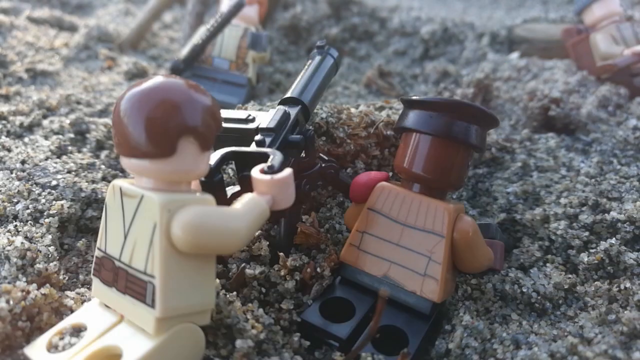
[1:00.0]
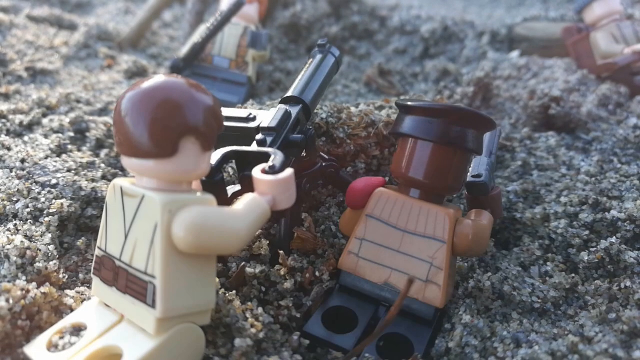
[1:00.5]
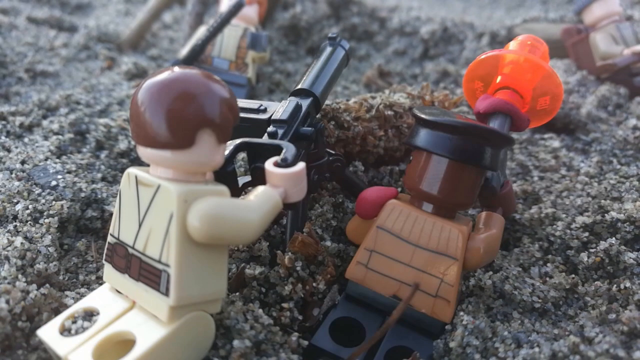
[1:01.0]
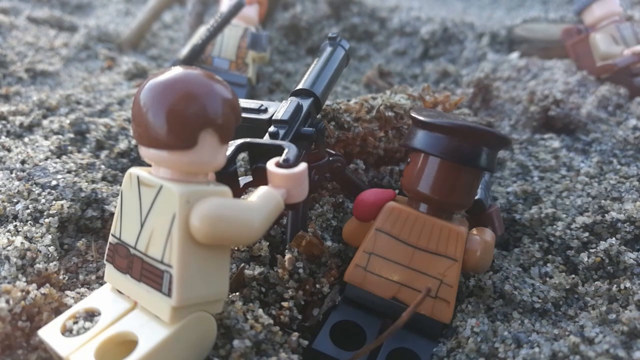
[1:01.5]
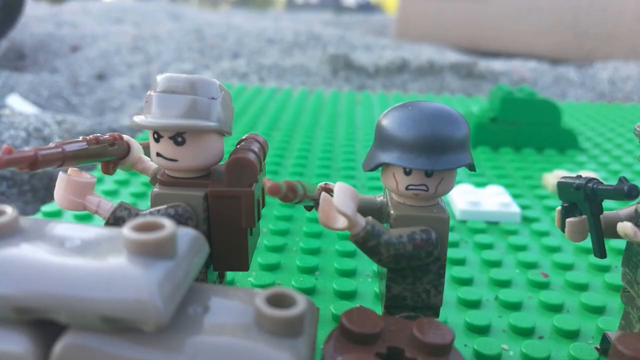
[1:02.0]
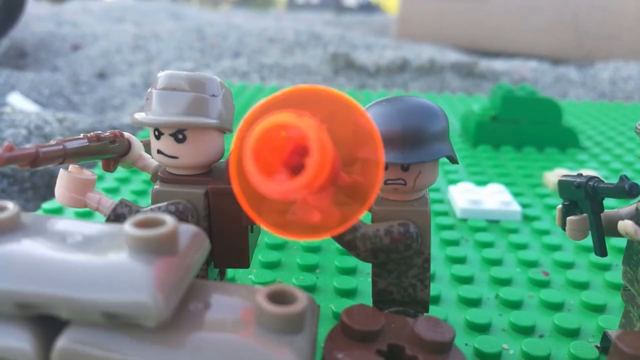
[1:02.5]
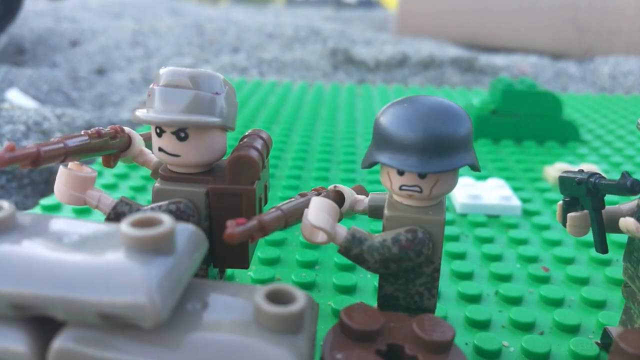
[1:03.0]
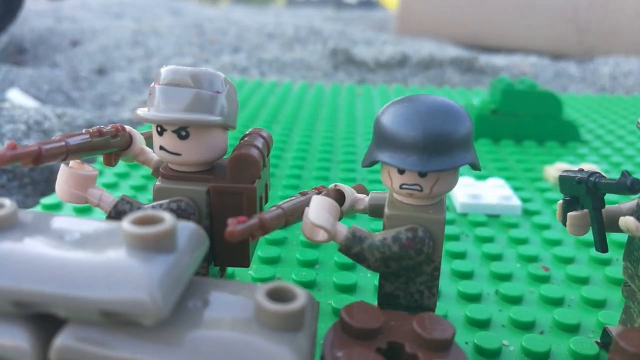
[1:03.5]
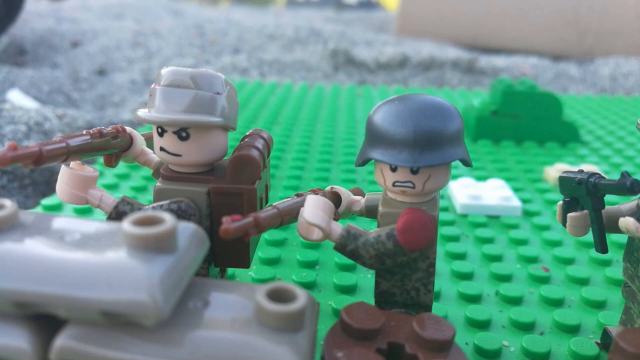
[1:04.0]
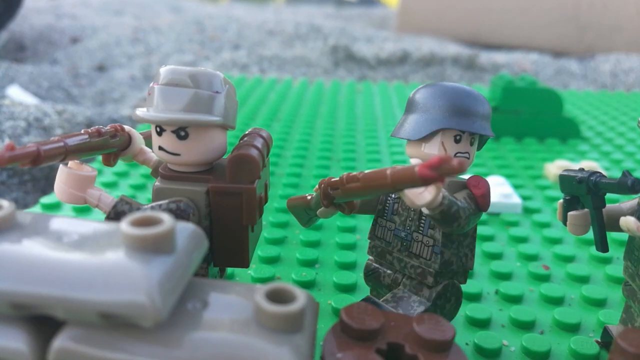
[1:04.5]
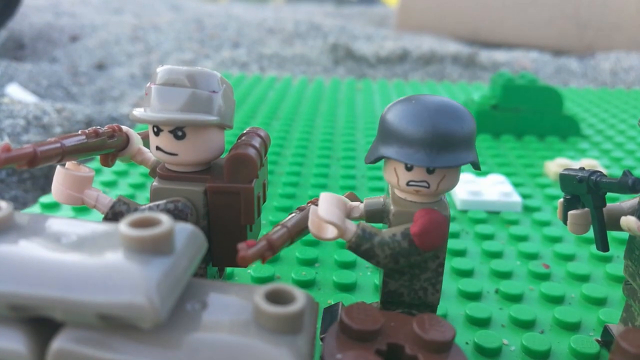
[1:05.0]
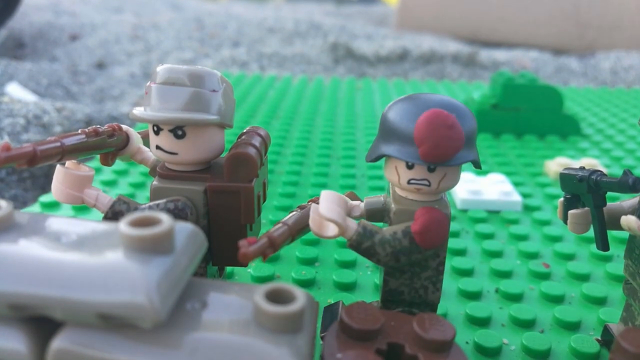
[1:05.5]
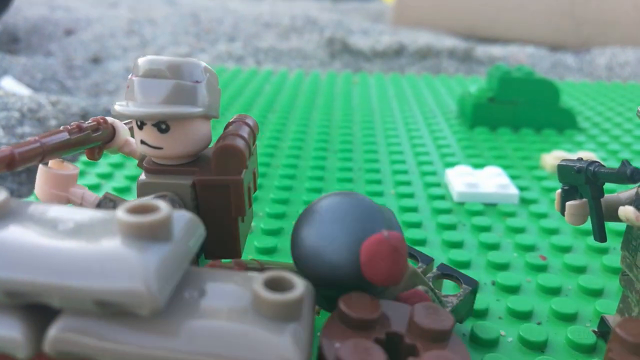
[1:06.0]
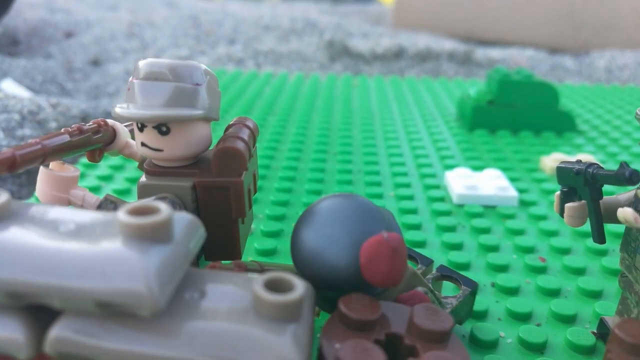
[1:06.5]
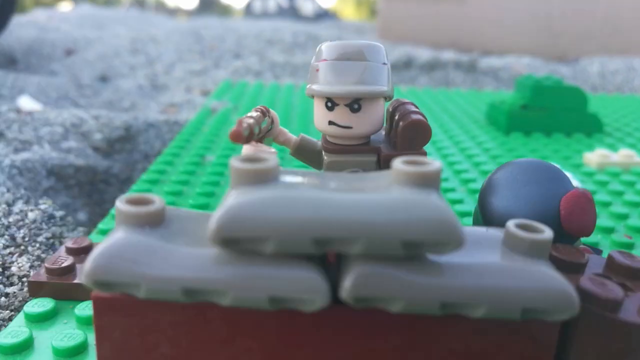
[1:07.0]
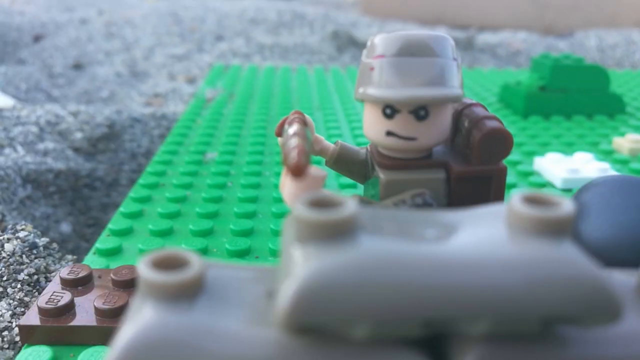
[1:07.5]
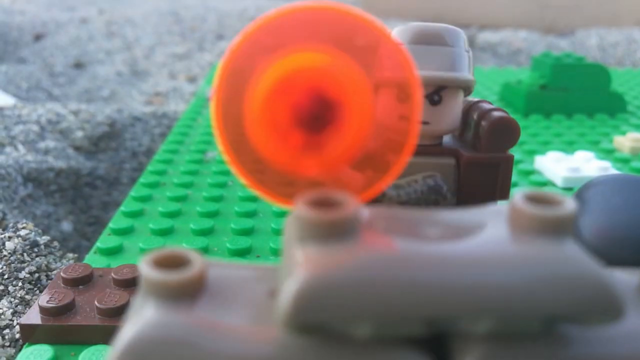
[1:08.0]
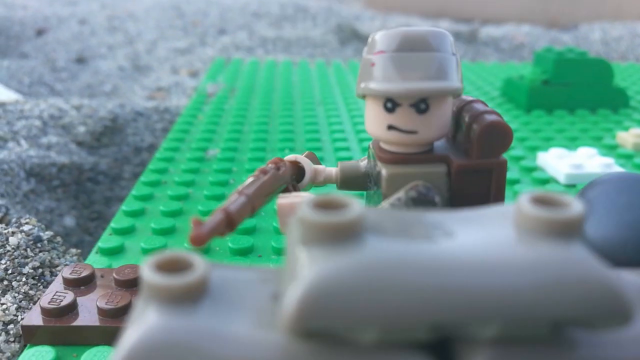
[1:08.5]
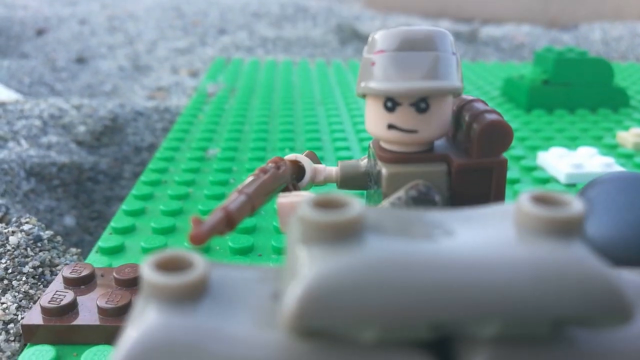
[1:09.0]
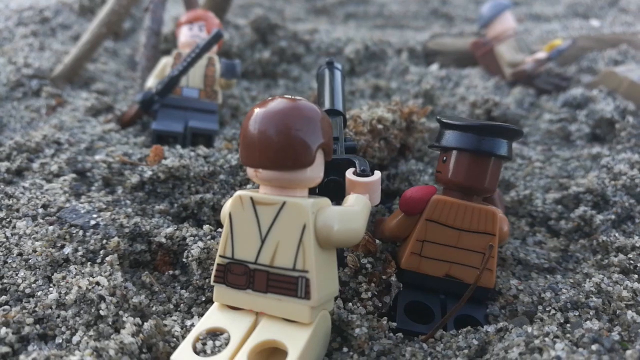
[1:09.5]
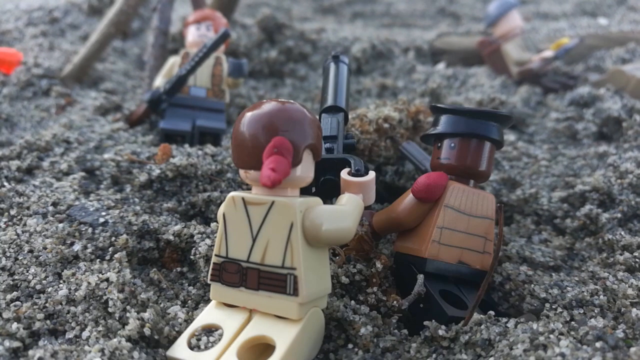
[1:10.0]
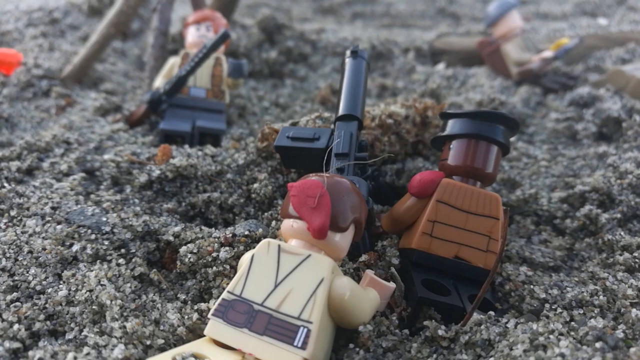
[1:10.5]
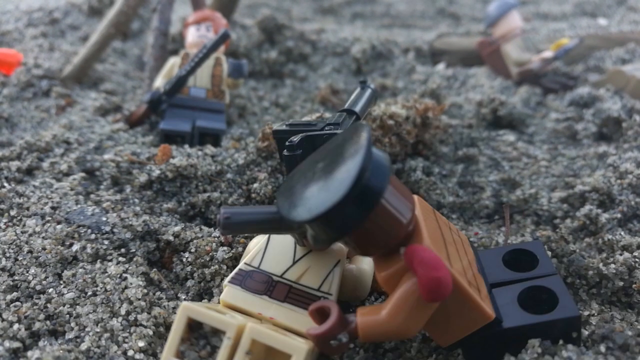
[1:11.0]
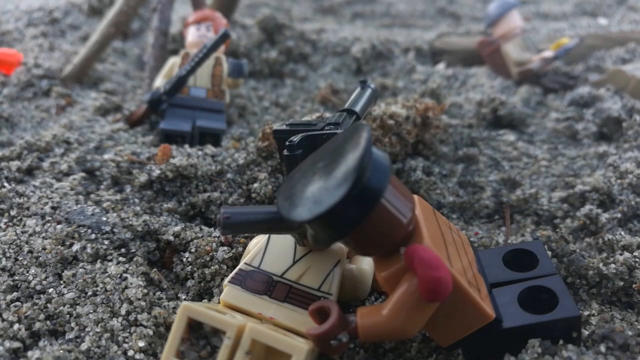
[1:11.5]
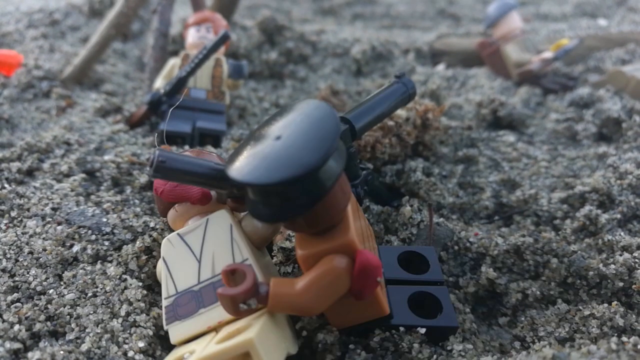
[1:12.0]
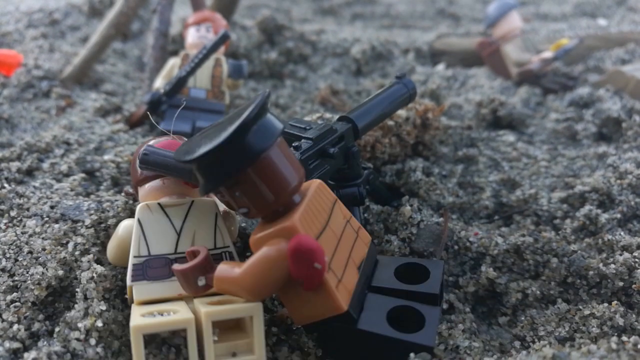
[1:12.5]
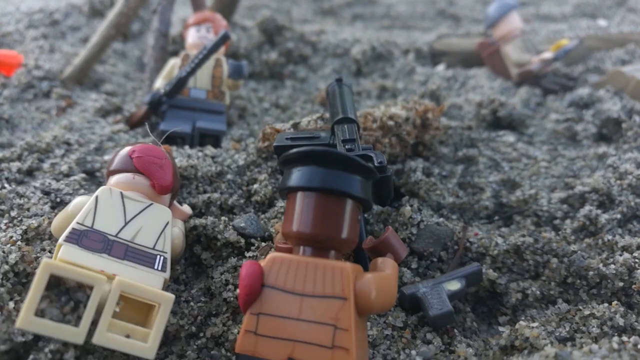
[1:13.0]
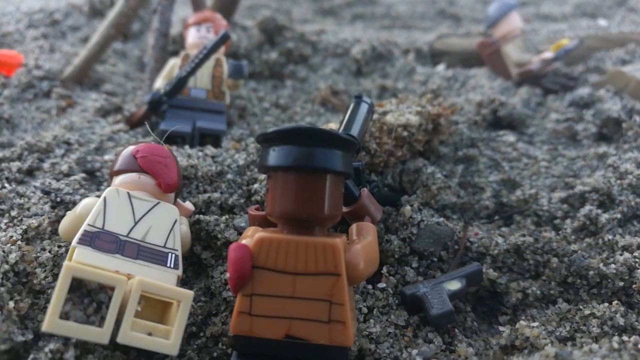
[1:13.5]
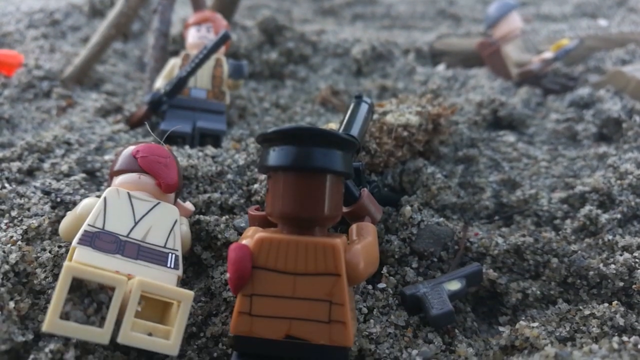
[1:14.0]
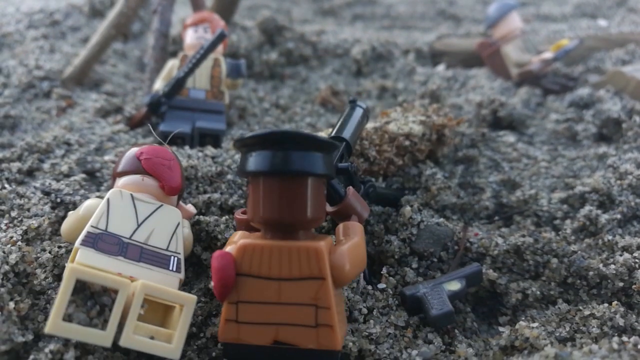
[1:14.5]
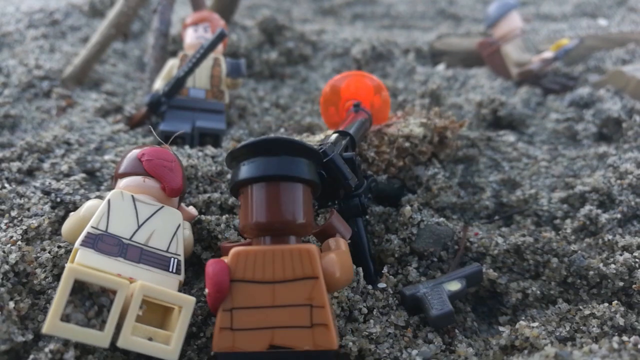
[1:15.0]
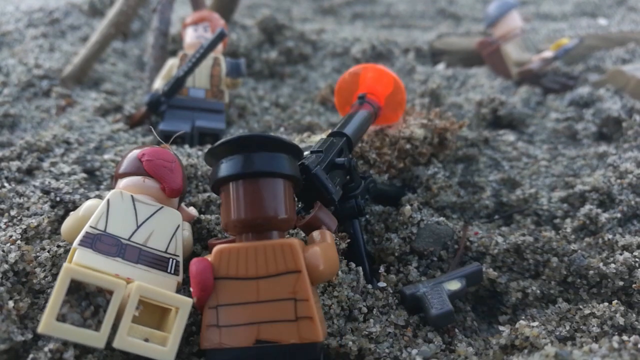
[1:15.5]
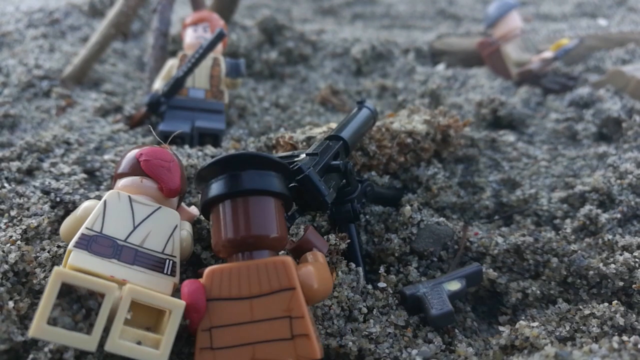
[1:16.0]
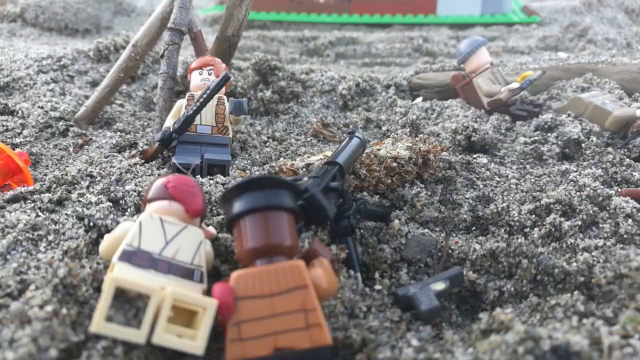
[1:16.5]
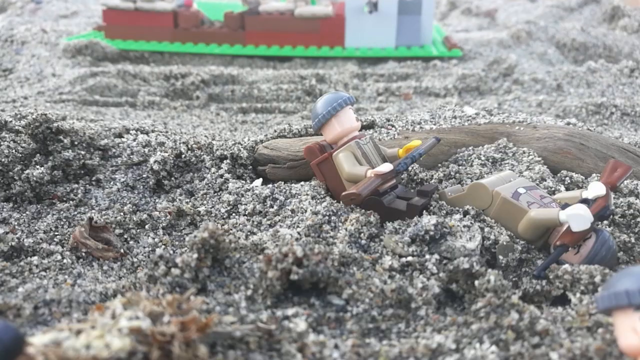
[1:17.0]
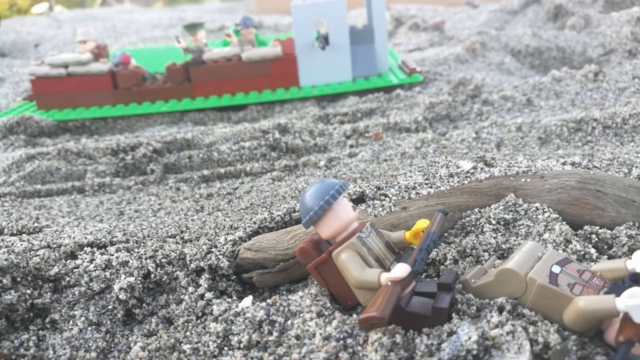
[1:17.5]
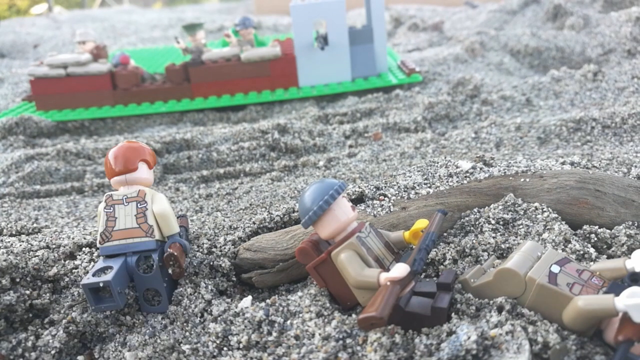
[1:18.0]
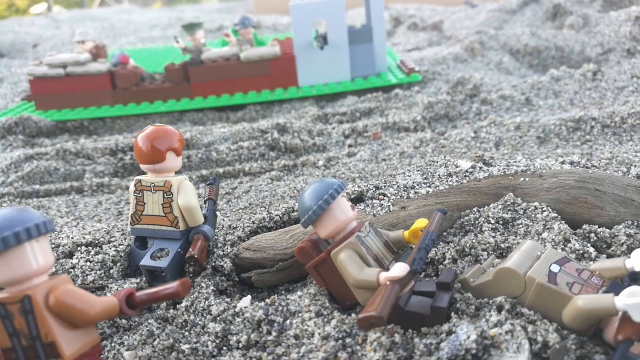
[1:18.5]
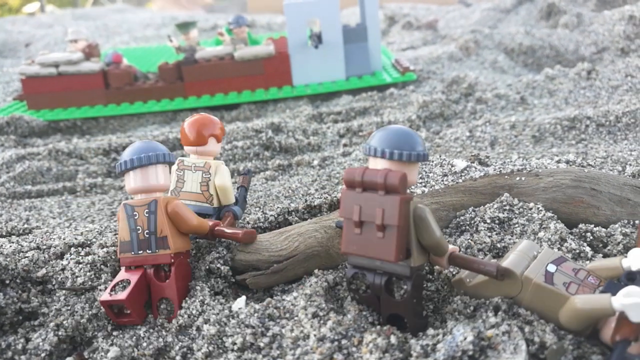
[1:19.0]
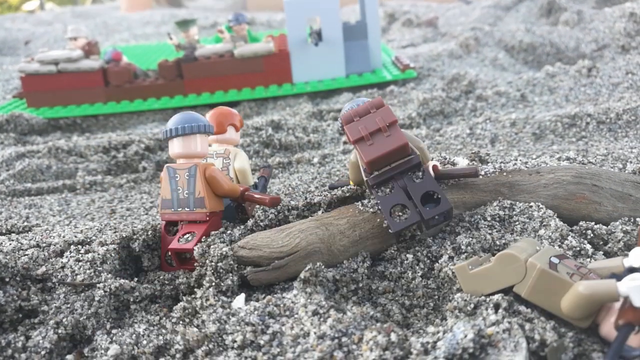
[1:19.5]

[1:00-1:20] The Americans keep firing the machine gun at the Germans, with one of them also firing his Colt 1911. The Germans are then shown: two Germans with rifles sit behind the walls of their bunkers, with angry expressions on their faces, firing back. One of them is hit with a spray of red play-doh blood and goes down, while the other keeps firing. Another American is hit, but his comrade takes over the machine gun, and the Americans charge up the beach toward the Germans behind their bunker walls. Three figures charge toward the German bunker: one in what looks like a woolly grey hat, one not wearing a helmet at all, and another with a grey hat and a backpack. The Germans are visible in the distance behind their walls.